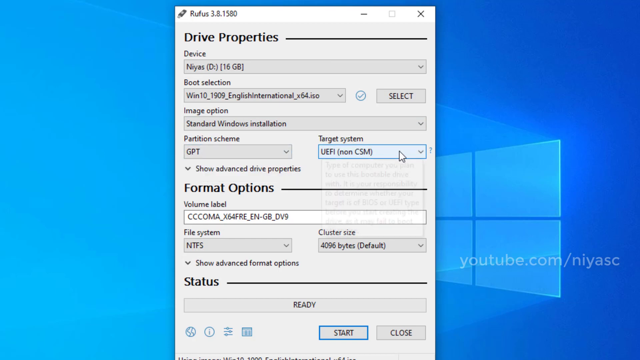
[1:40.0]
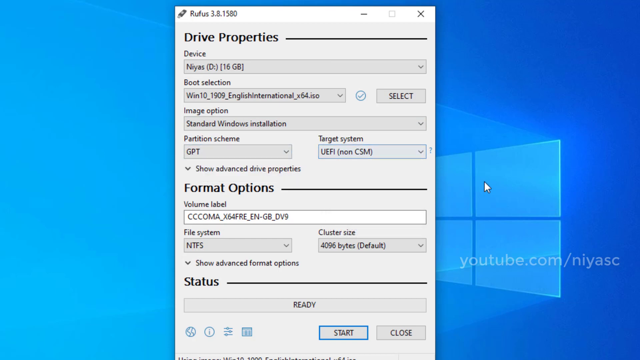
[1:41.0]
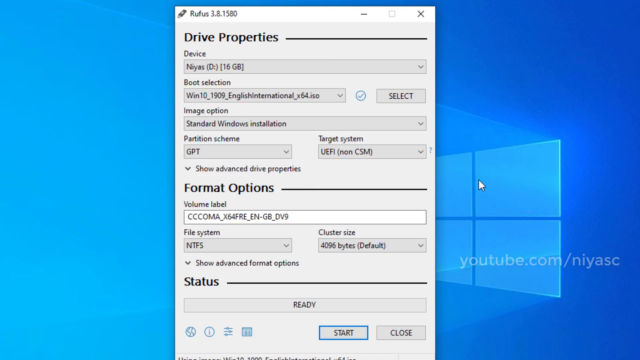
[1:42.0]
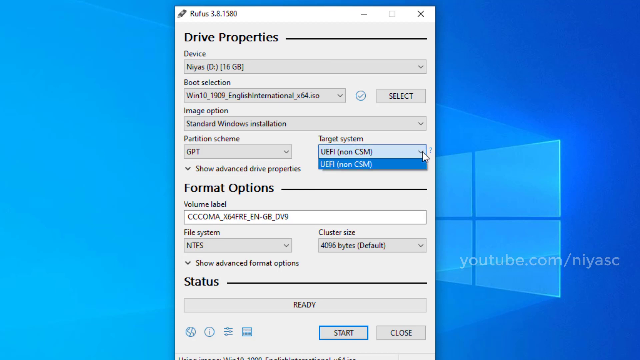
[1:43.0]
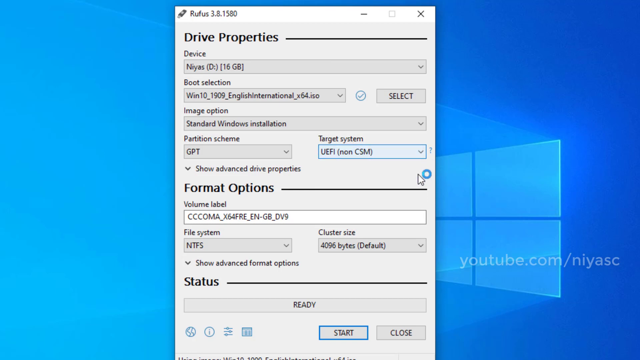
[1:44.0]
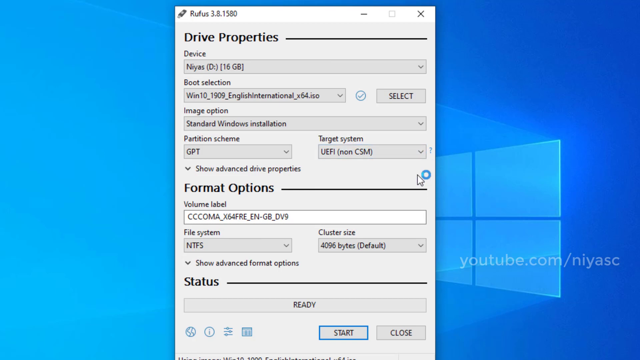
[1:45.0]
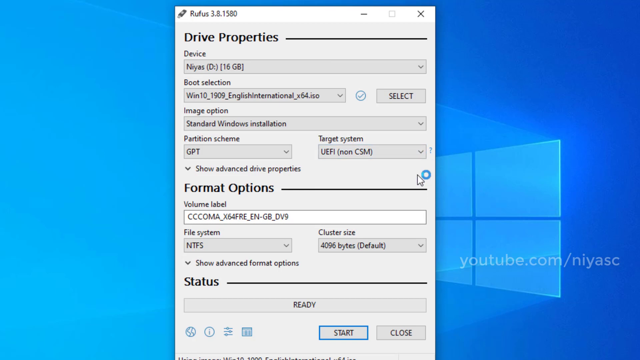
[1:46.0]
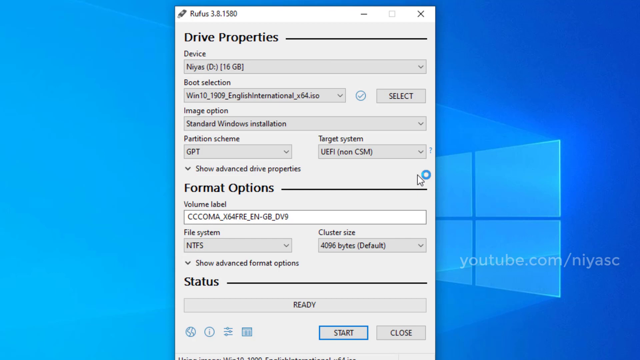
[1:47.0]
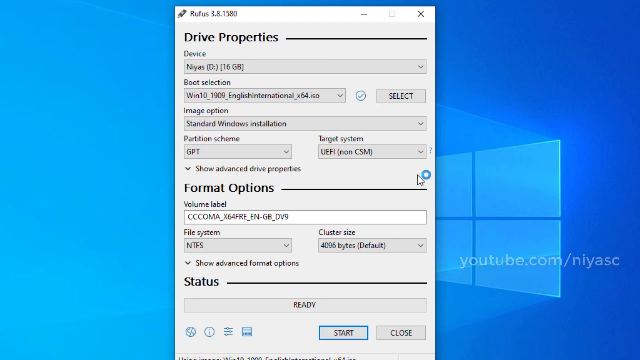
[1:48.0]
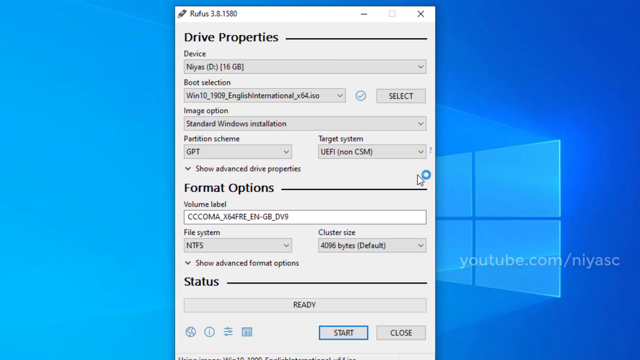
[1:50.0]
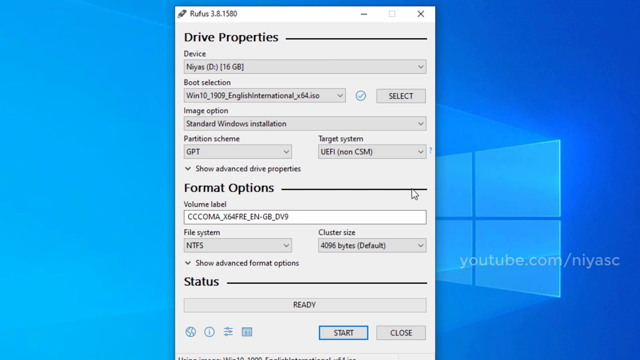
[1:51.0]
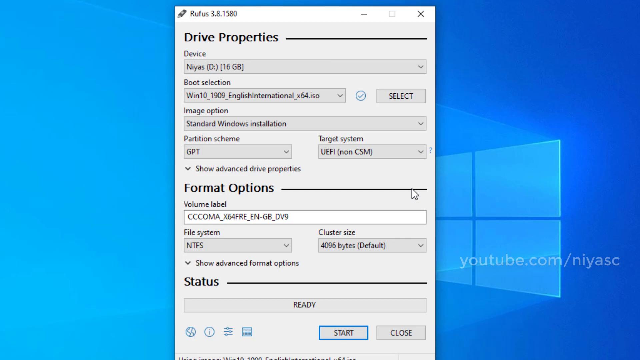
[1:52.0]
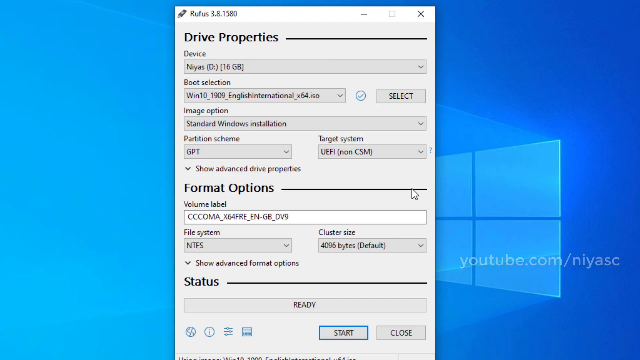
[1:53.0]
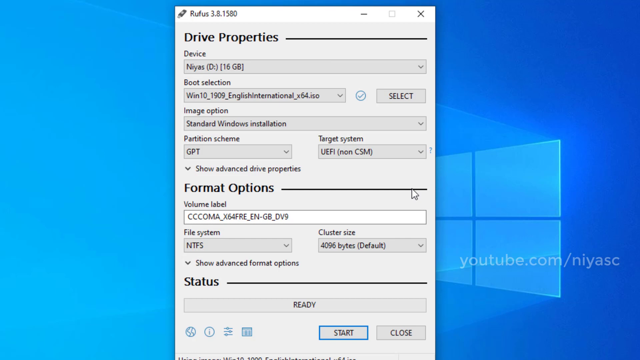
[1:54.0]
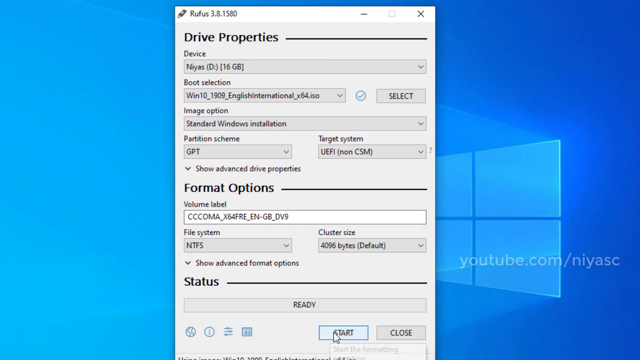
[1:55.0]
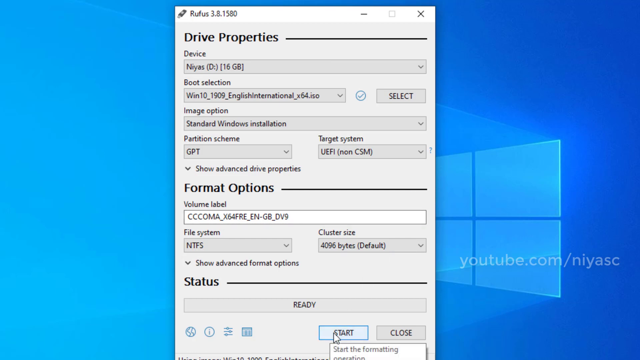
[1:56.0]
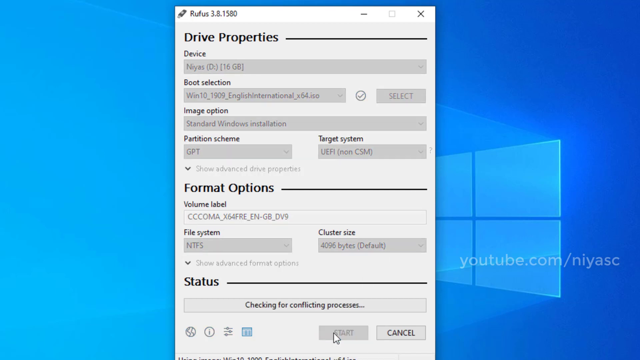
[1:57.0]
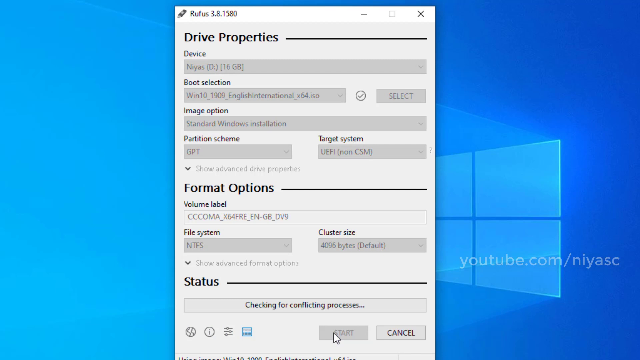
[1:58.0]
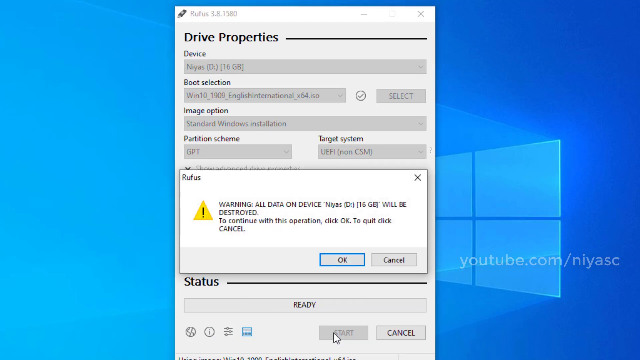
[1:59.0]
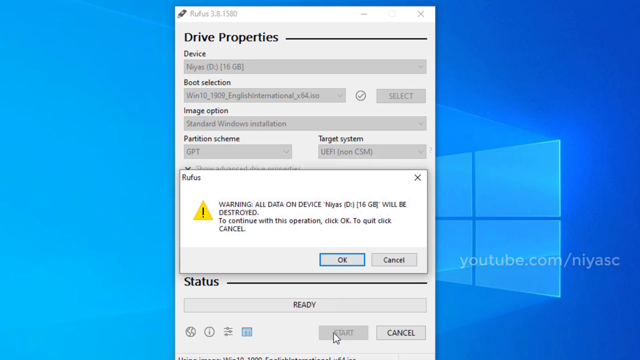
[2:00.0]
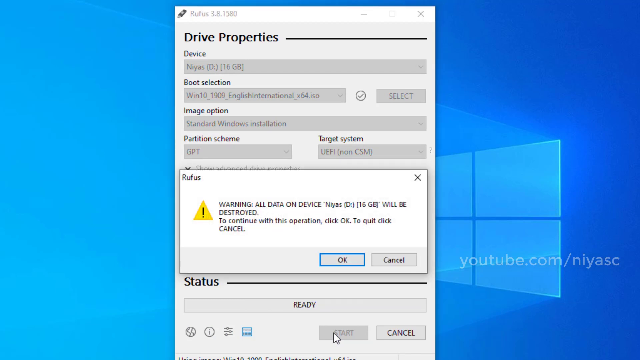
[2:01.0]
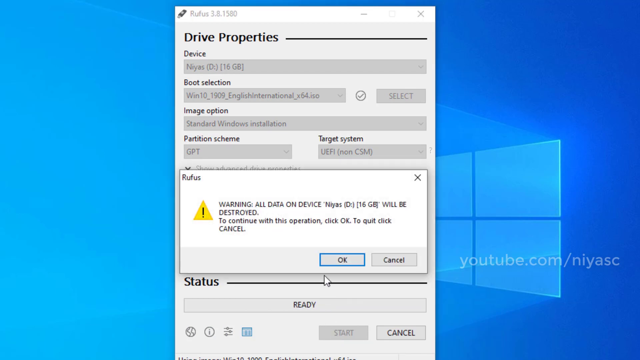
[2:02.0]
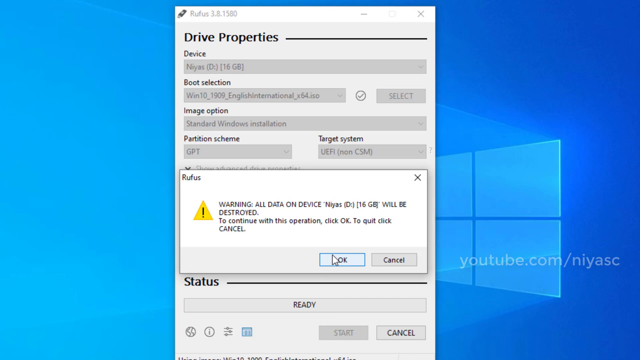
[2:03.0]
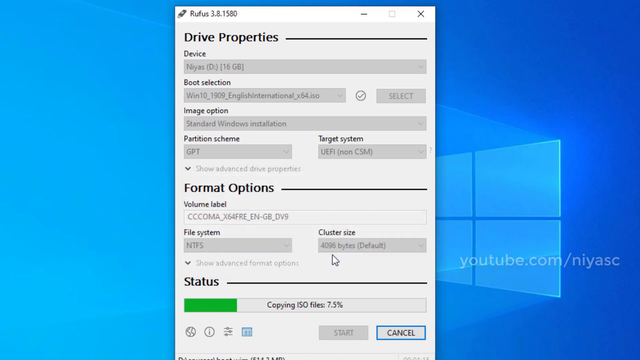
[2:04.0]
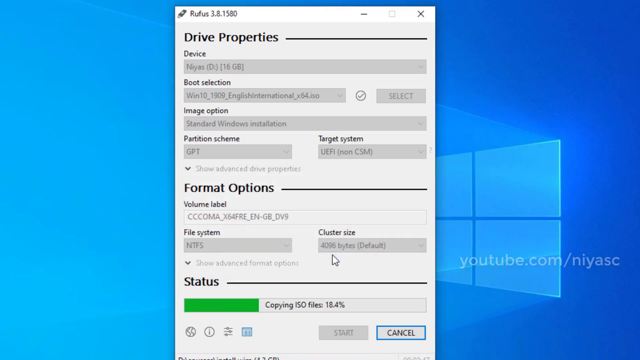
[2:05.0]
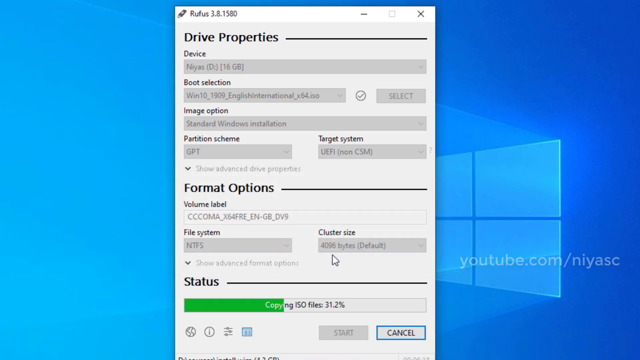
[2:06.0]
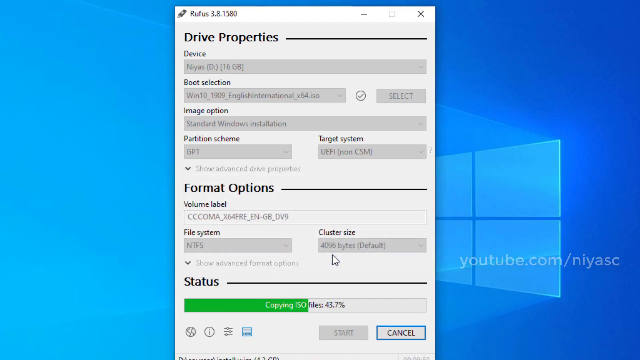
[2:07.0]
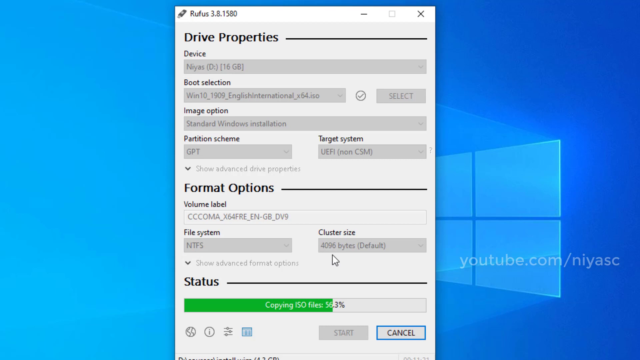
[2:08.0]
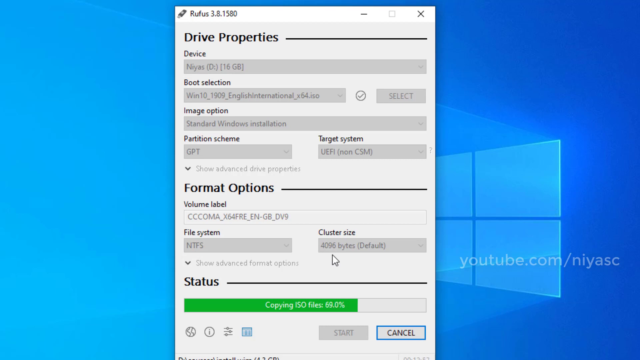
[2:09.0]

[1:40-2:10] The user briefly clicks on target system, and the drop-down shows some information in gray text. The user moves the cursor to the right side of the screen and clicks the target system drop-down again; it has only the current option available, "UEFI (non-CSM)". A loading icon, a blue circle, appears to the right of the cursor. The user moves the cursor to the start button at the bottom and clicks it. Below status it says "checking for conflicting processes". A pop-up appears reading "warning, all data on device will be destroyed. Continue this operation, click OK, to quit, click Cancel." The user hovers over the OK button and clicks it. The status then reads "copying ISO files", with a green loading bar and the loading percentage to its right.